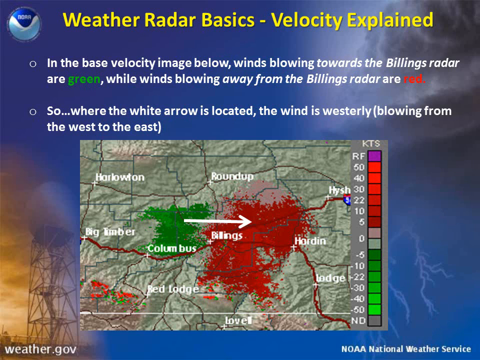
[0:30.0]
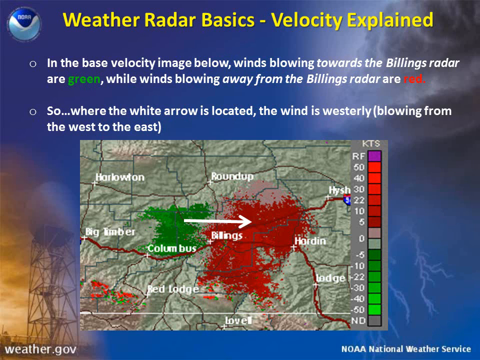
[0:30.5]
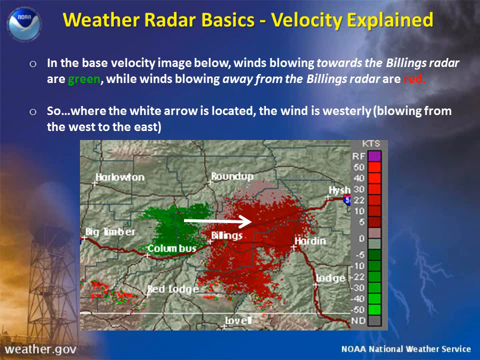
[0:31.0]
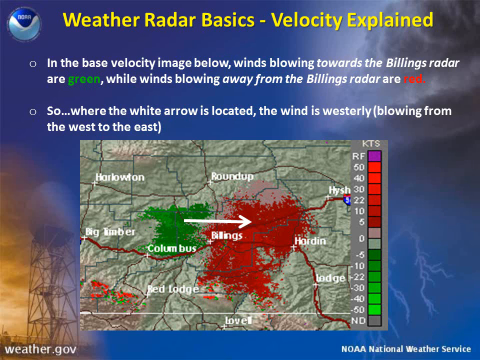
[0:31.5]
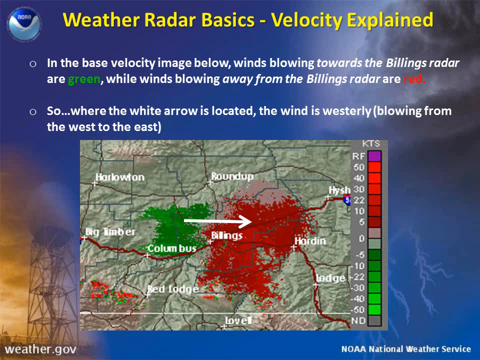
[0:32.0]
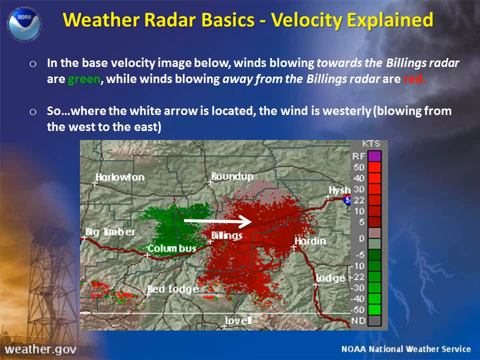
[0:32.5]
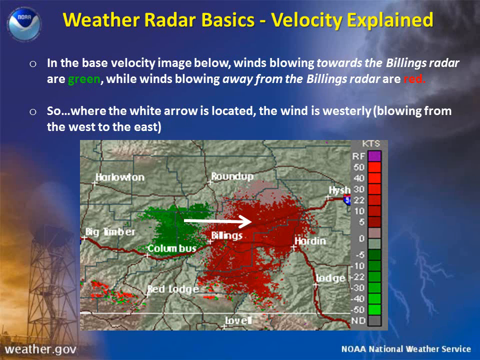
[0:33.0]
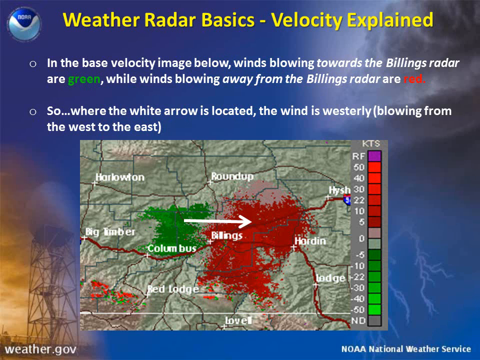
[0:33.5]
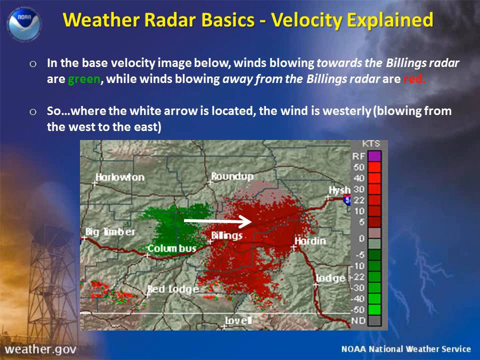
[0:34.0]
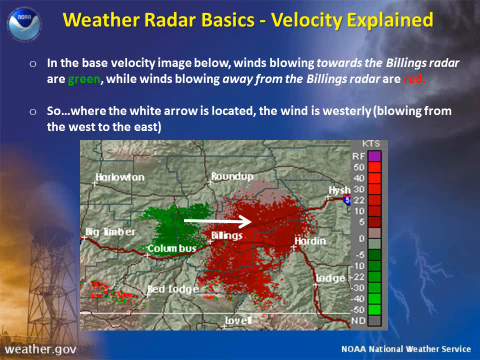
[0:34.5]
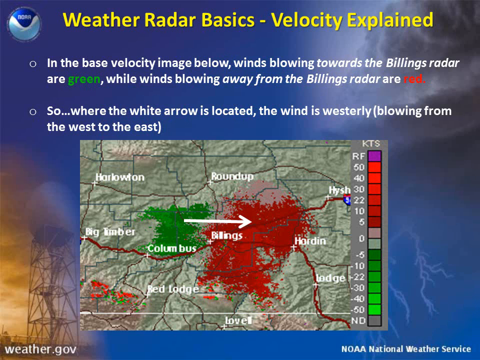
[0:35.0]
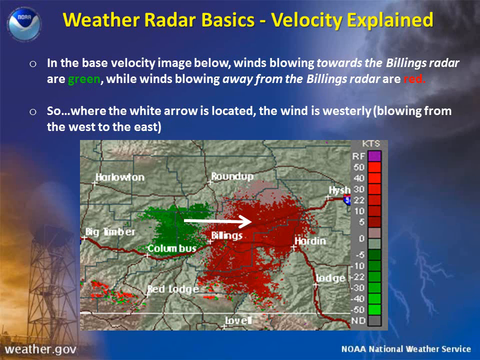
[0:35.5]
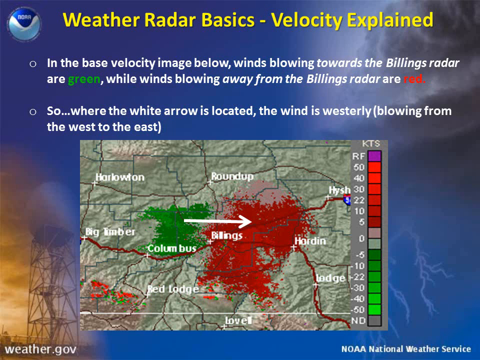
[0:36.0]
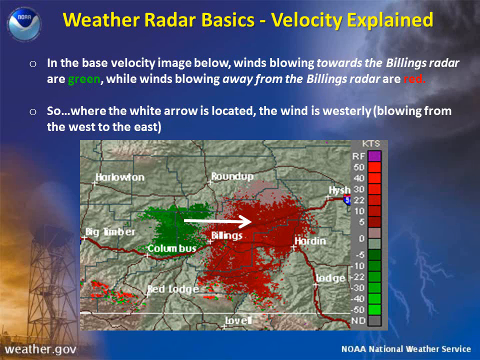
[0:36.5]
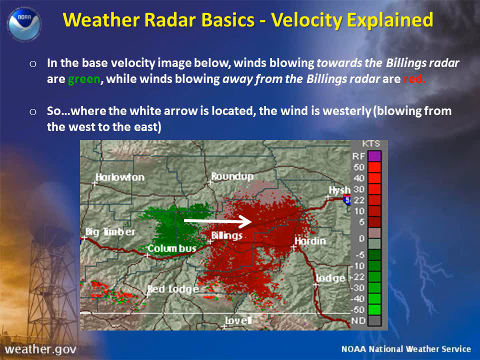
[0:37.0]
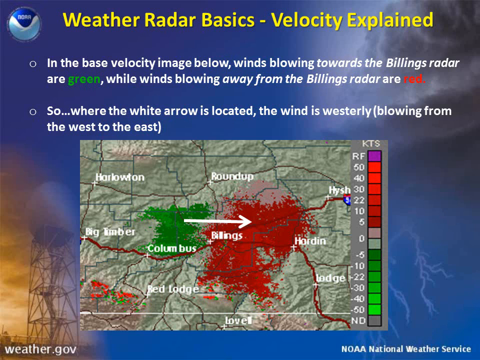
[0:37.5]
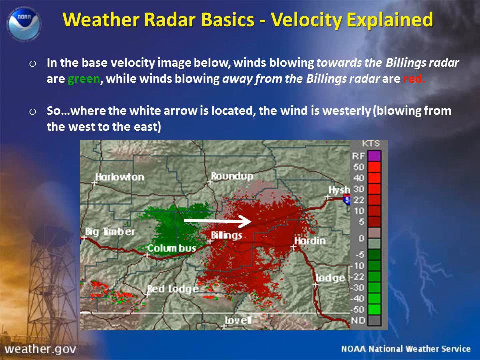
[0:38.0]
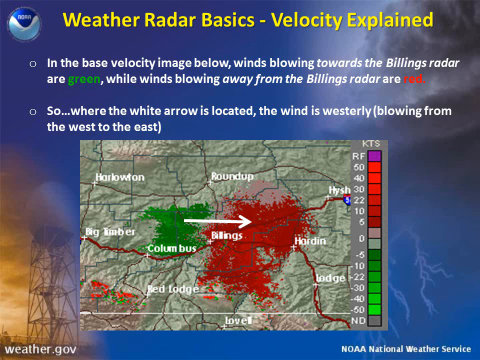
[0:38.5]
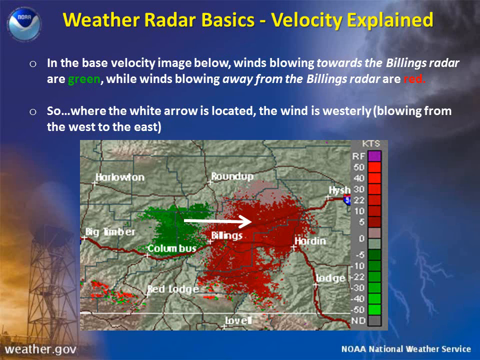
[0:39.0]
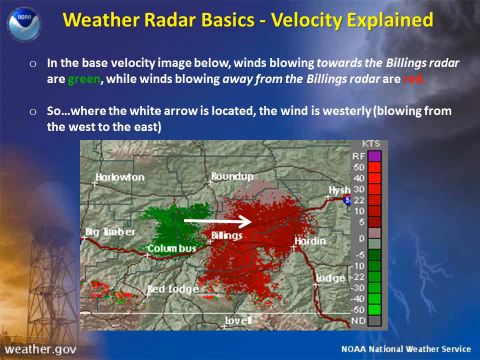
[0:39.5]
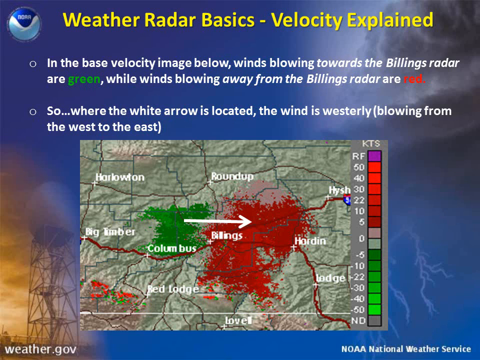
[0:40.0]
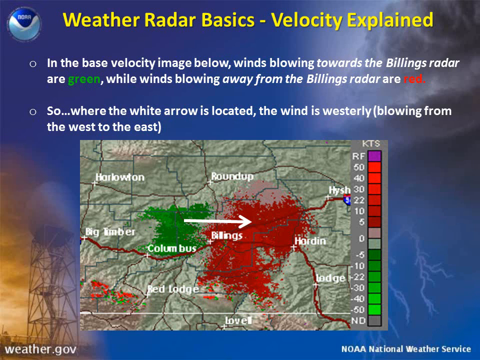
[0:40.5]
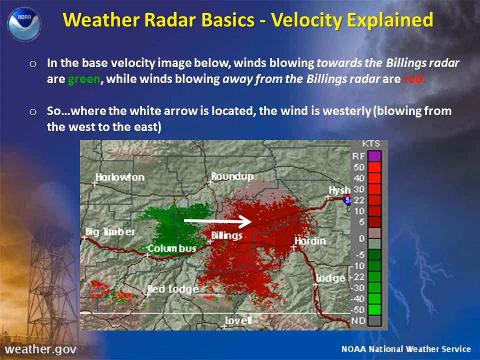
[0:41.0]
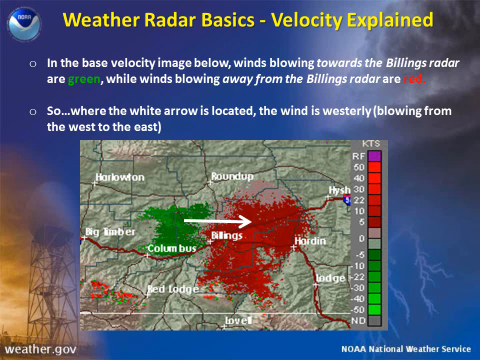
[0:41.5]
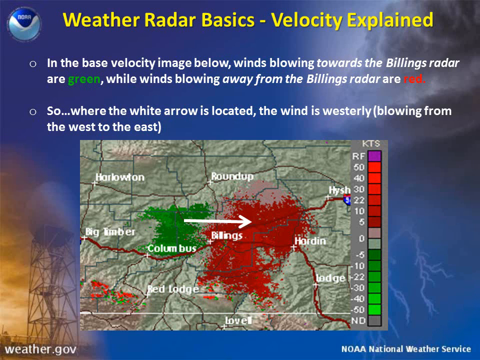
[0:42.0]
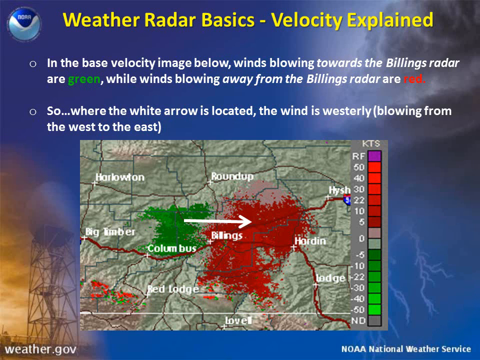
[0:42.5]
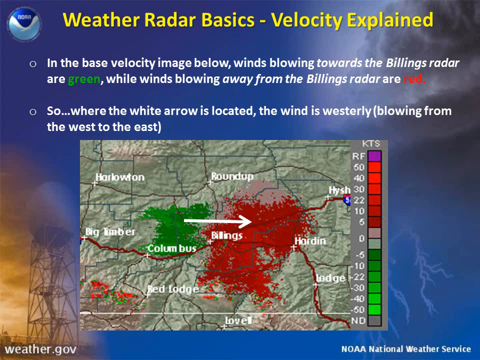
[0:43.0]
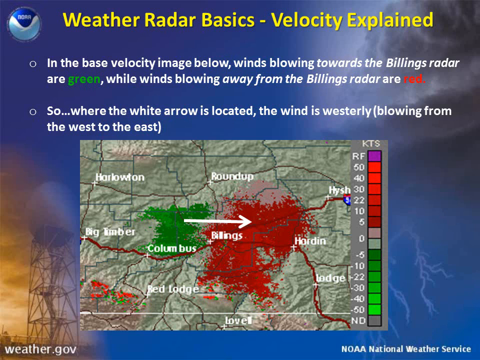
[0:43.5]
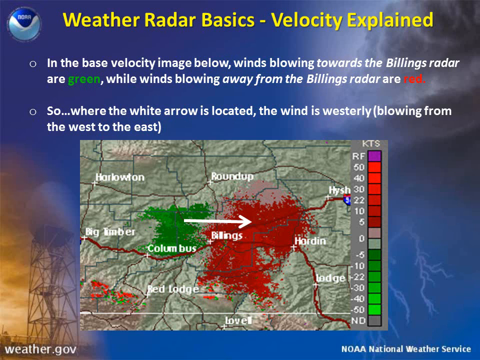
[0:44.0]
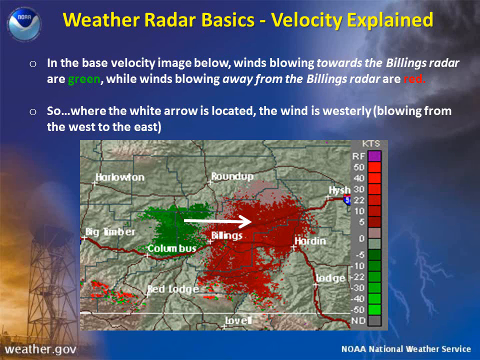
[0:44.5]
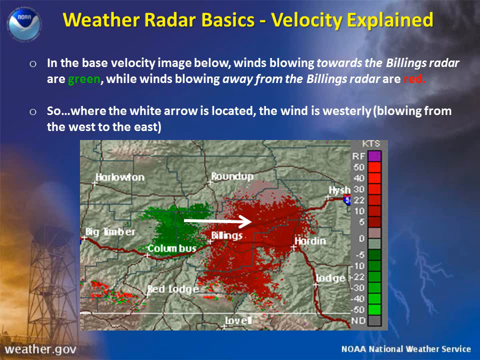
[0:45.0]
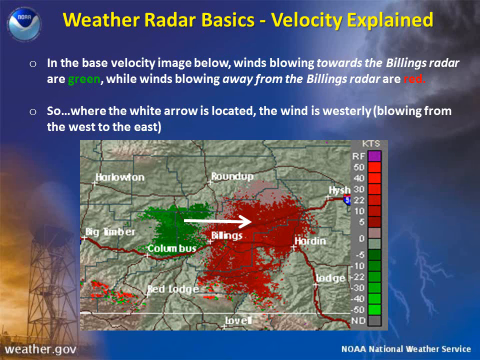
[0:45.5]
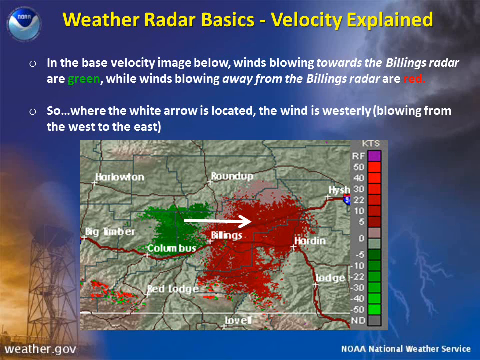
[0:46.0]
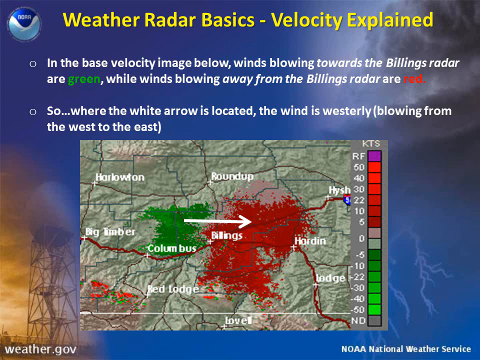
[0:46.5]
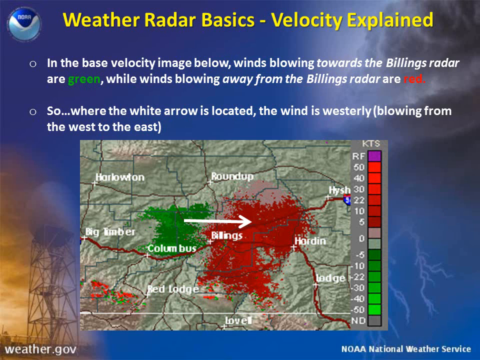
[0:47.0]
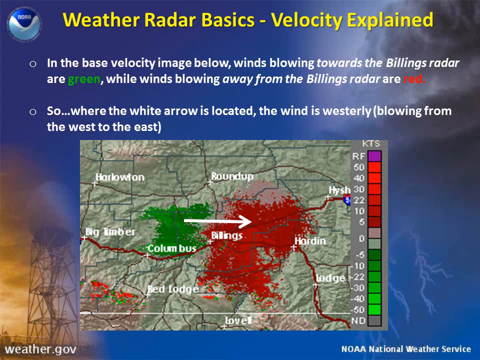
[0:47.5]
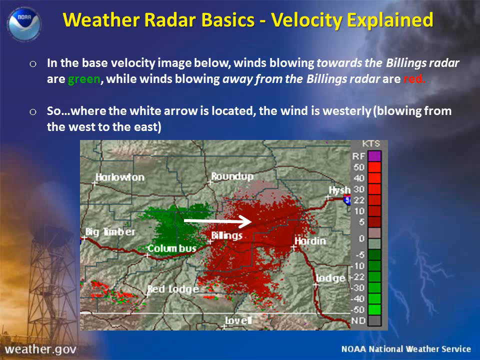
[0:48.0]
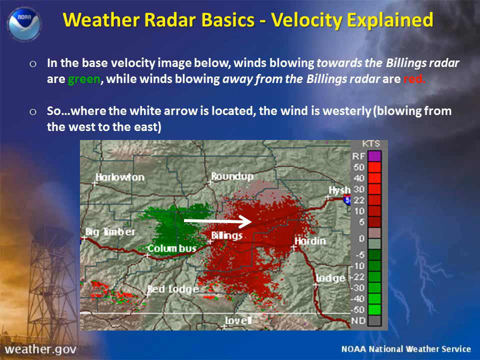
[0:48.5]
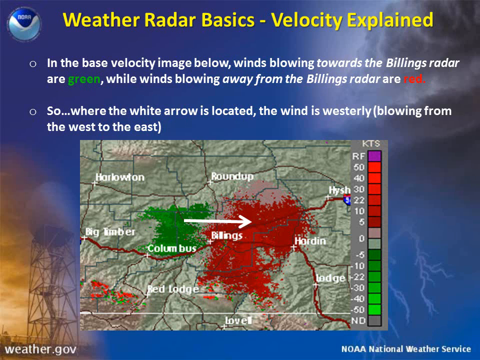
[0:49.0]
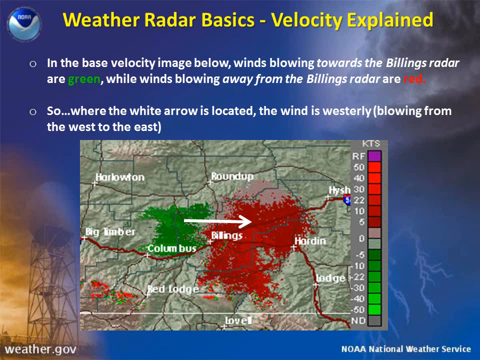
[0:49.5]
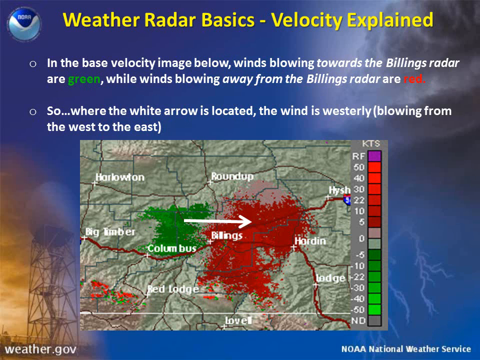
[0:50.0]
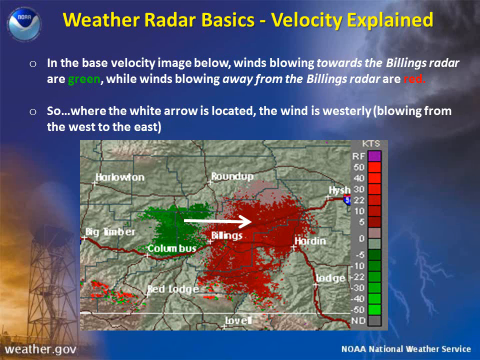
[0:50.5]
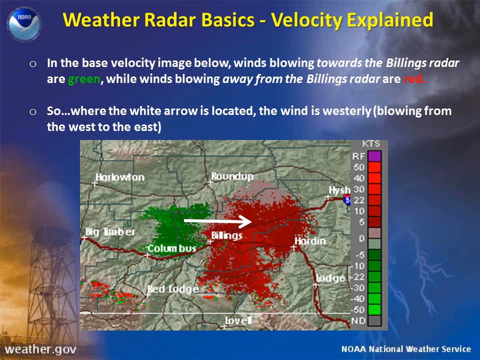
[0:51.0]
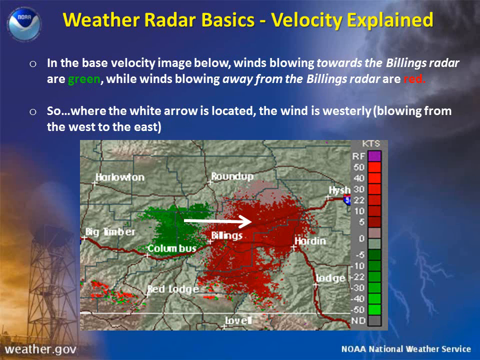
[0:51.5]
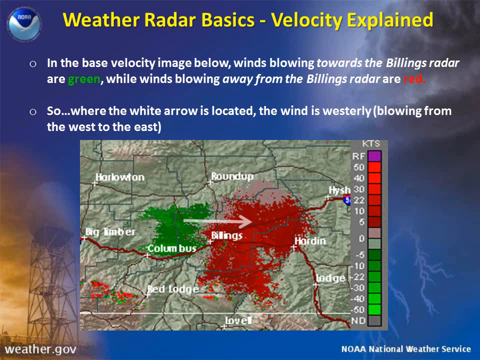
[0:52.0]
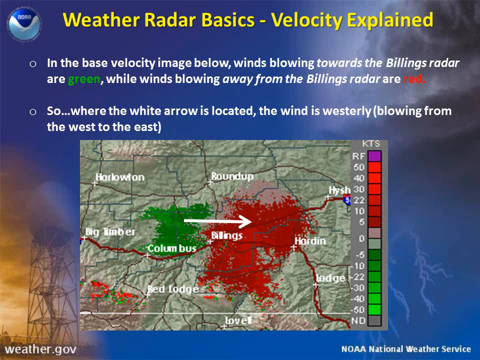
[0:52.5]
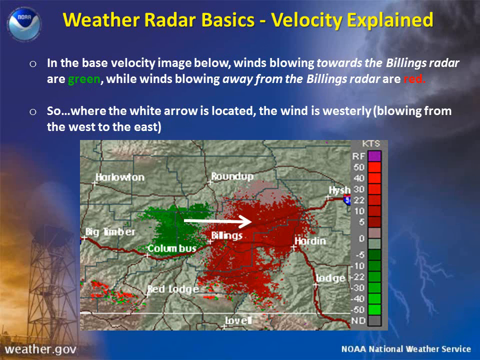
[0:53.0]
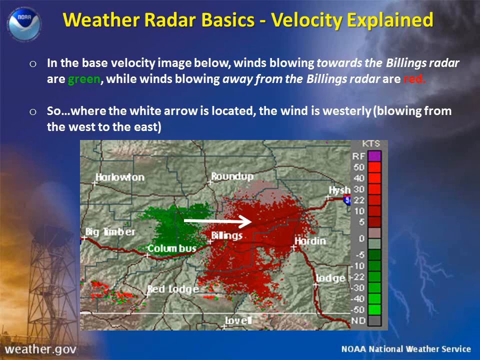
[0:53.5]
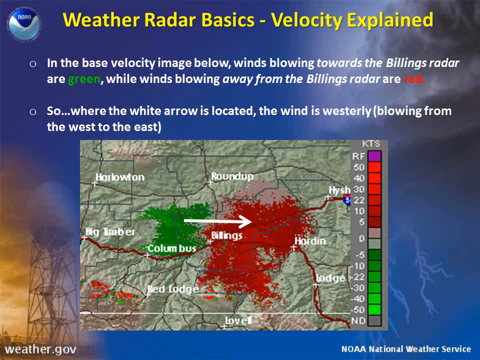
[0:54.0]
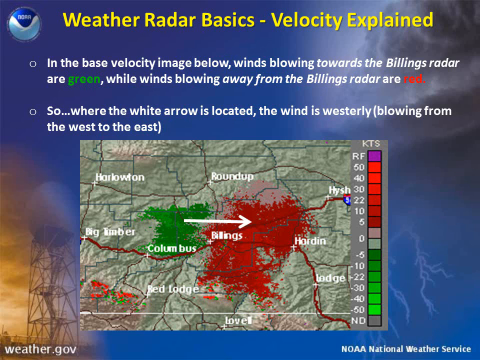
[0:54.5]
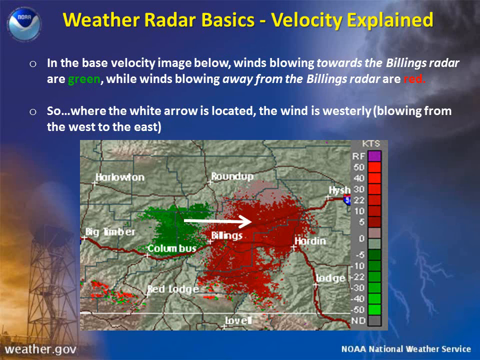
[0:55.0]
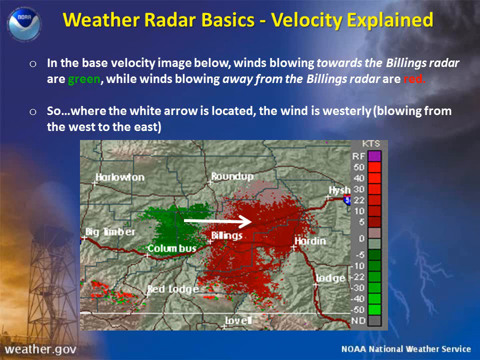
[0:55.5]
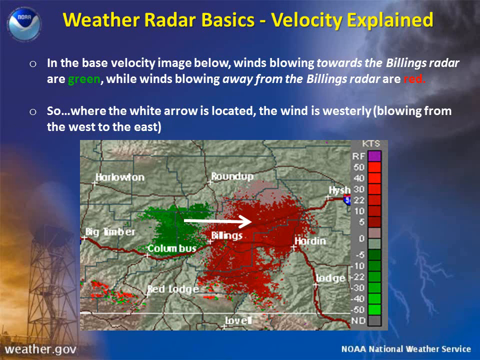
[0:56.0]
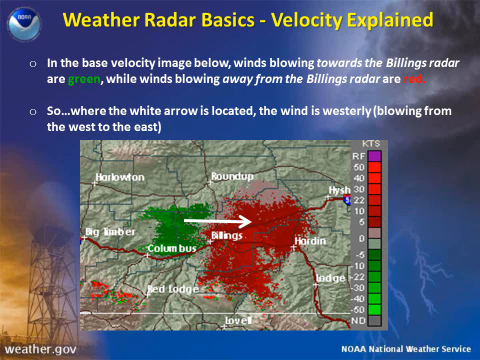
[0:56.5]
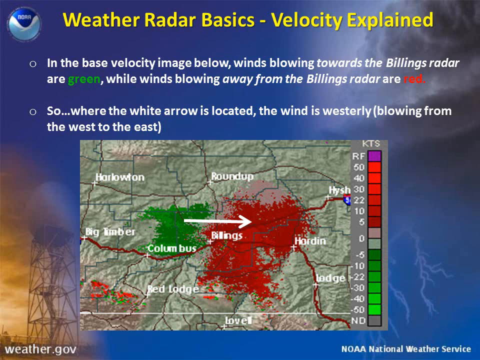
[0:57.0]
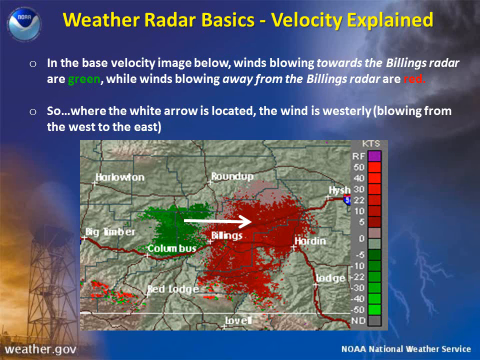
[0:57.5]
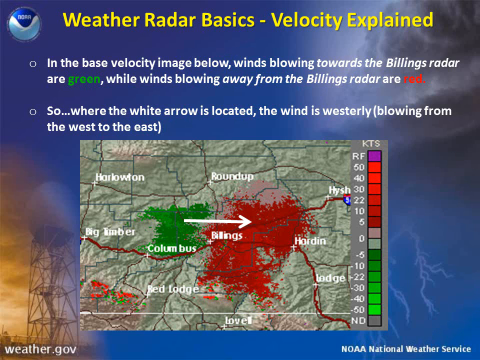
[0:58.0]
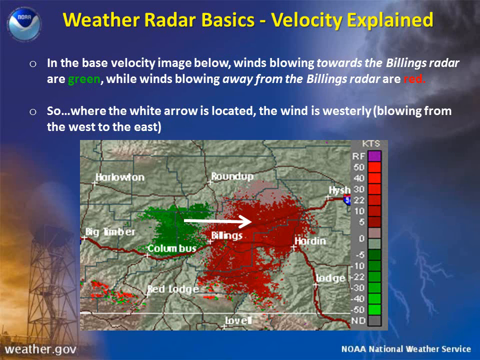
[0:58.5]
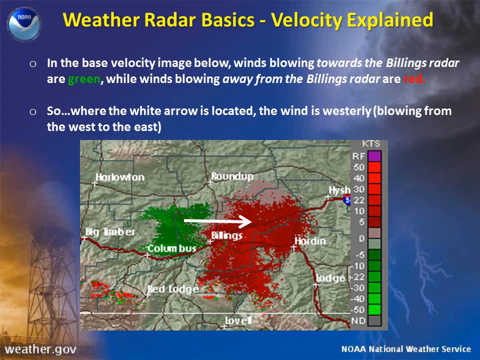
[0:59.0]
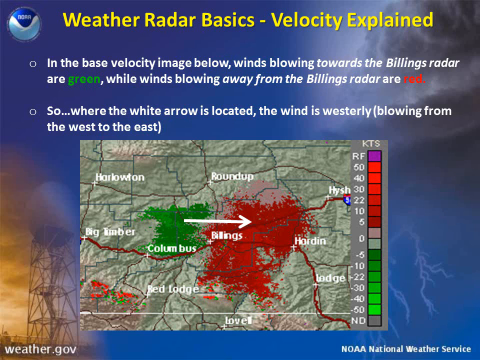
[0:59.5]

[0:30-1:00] The slide's background has dark clouds and lightning bolts, with a shade of blue running diagonally across the middle. In the bottom left is an orangeish hue, a tower, and maybe a circular satellite or device on top that looks like it can be used to measure the weather in some way. The slide is titled "Weather Radar Basics Velocity Explained" in bold yellow text. Next to the title is a circular logo that could be linked to whoever is providing the slide. Underneath are hollow bullet points with solid white text. The first reads "in the base velocity image below, winds blowing towards the Billings radar are green, while the winds blowing away from the Billings radar are red," with the word "green" in green text and "red" in red text. Beneath it, the second bullet point reads "so... where the white arrow is located, the wind is westerly blowing from the west to the east." A map shows a patch of green and a larger patch of red, with an arrow from the green patch pointing towards the red patch.